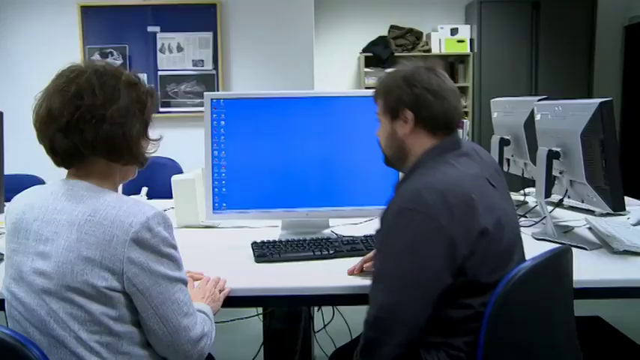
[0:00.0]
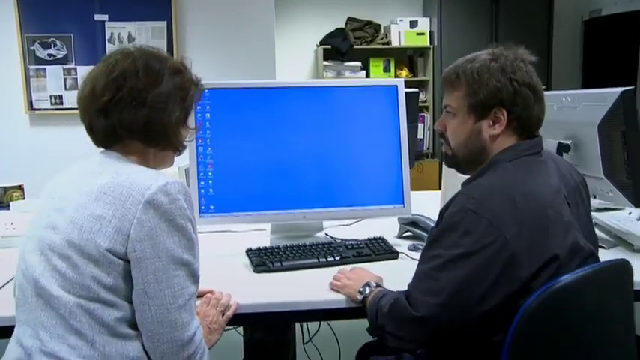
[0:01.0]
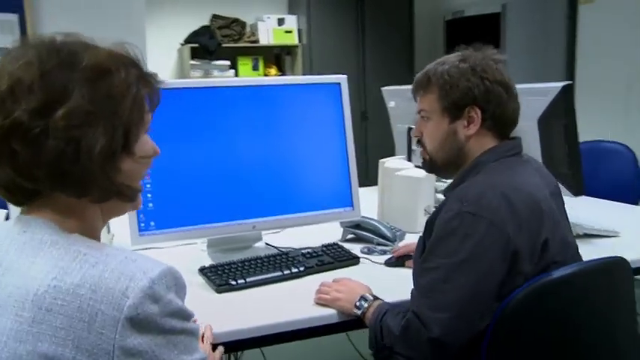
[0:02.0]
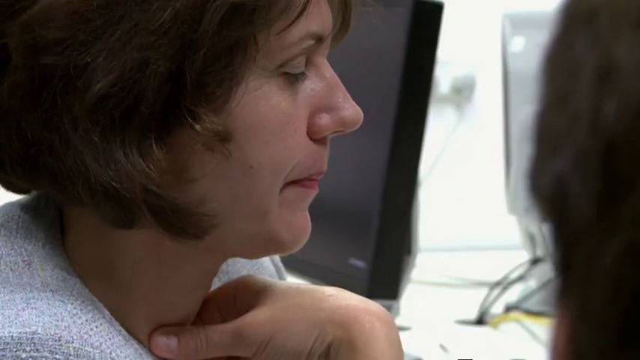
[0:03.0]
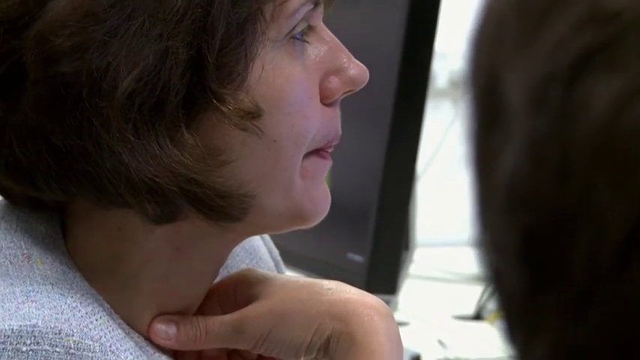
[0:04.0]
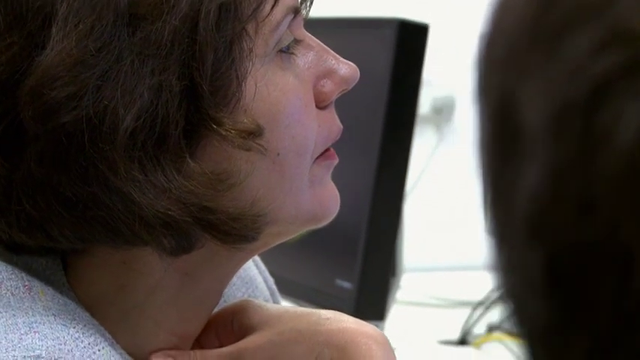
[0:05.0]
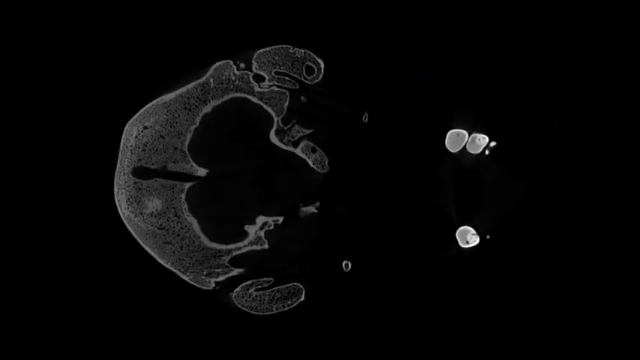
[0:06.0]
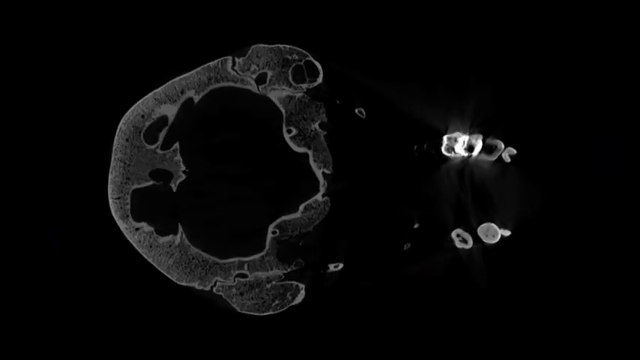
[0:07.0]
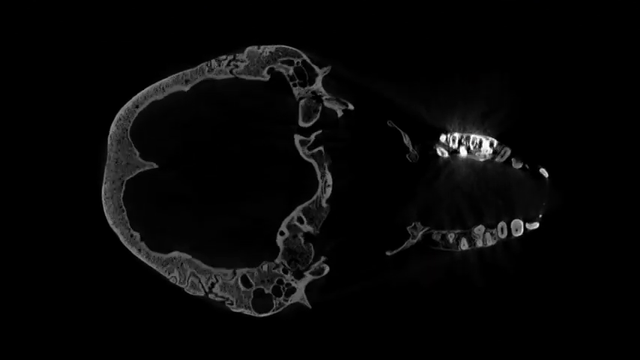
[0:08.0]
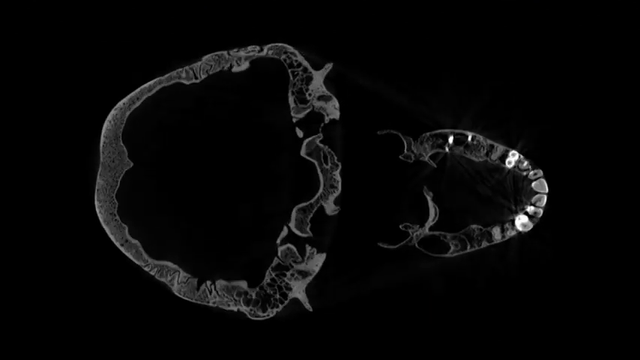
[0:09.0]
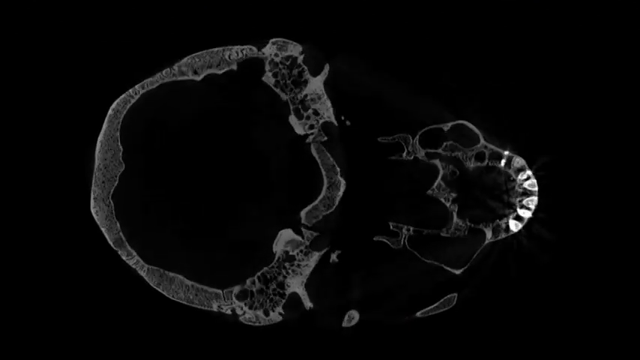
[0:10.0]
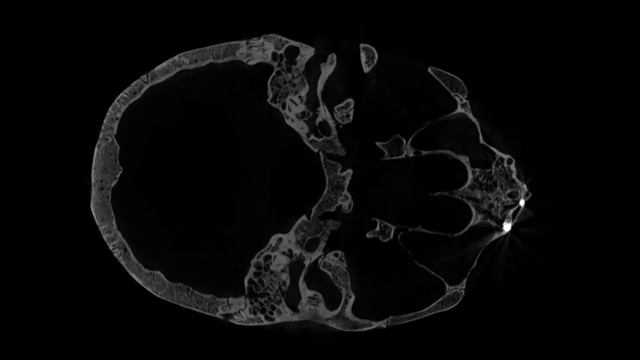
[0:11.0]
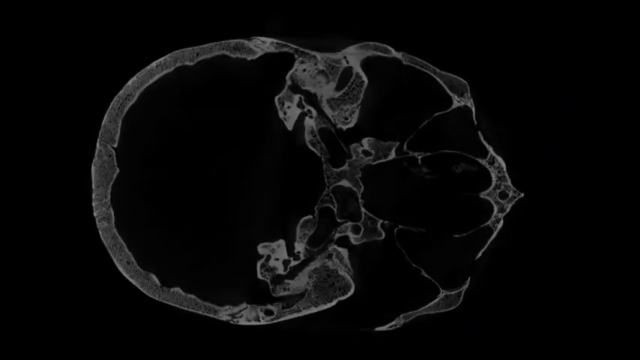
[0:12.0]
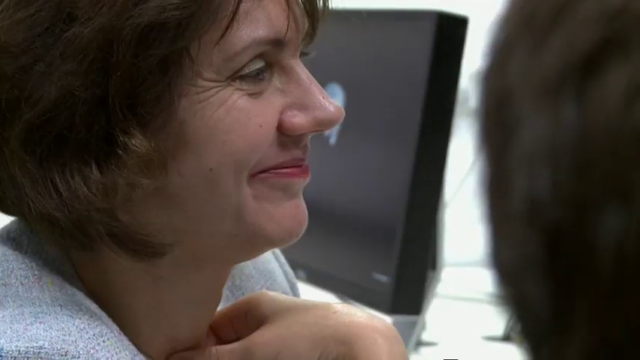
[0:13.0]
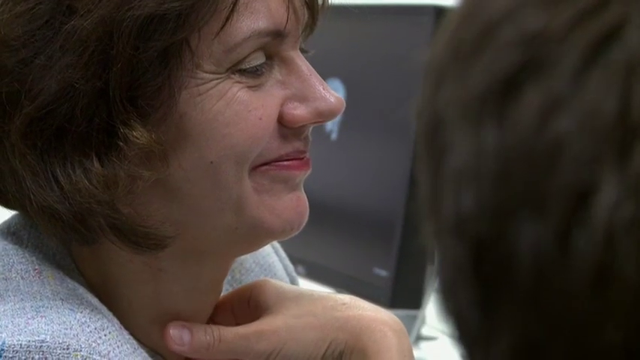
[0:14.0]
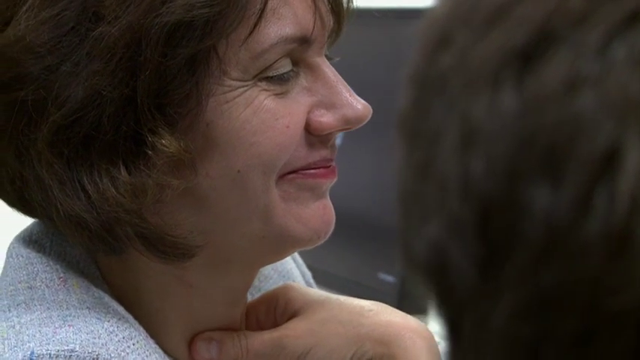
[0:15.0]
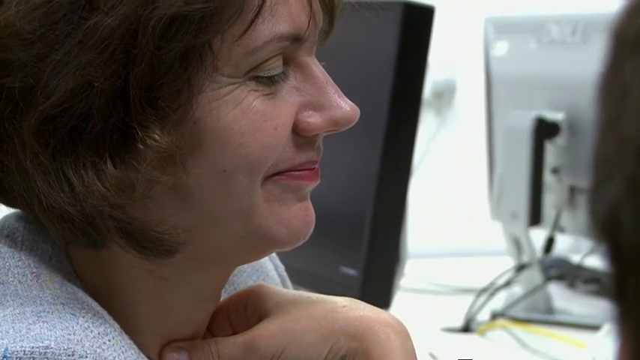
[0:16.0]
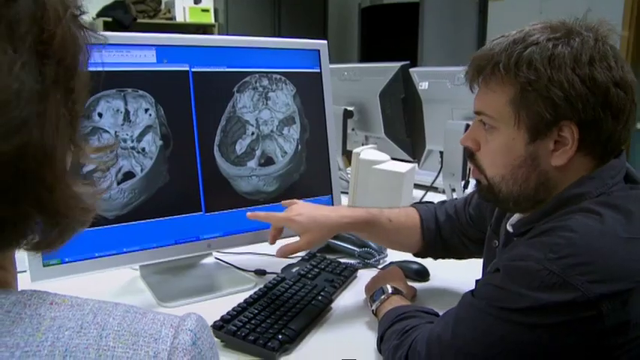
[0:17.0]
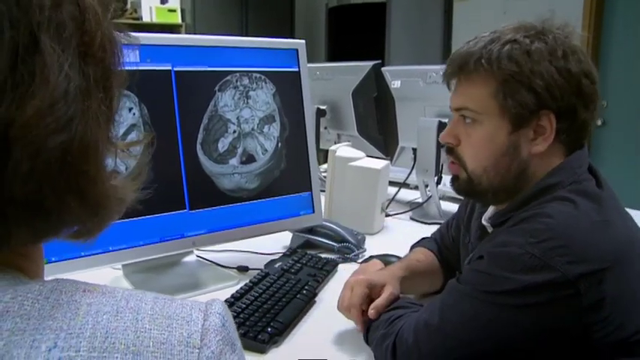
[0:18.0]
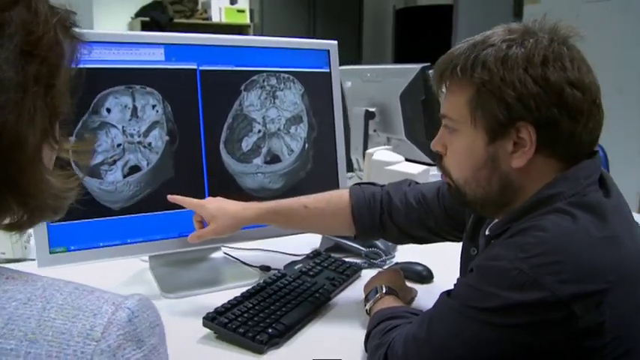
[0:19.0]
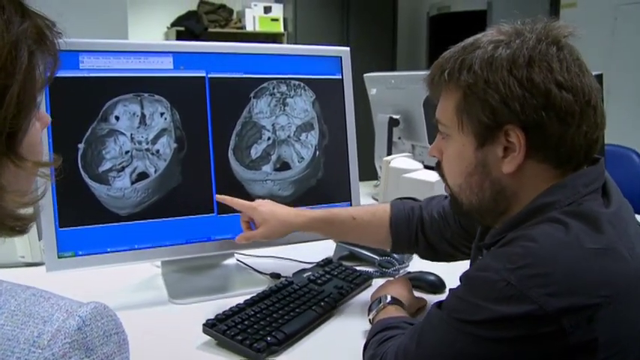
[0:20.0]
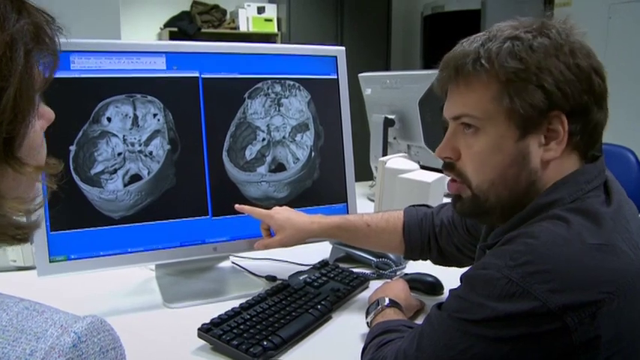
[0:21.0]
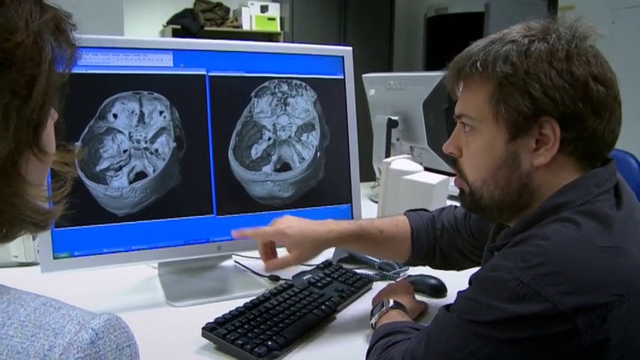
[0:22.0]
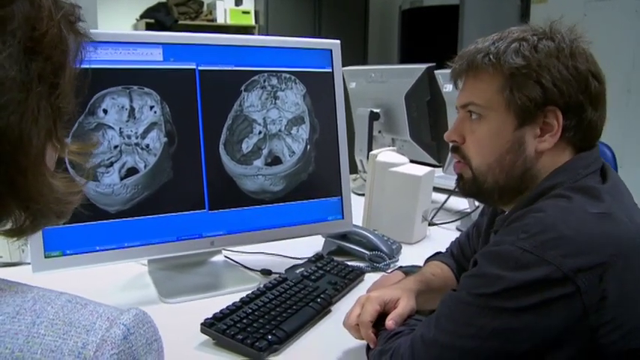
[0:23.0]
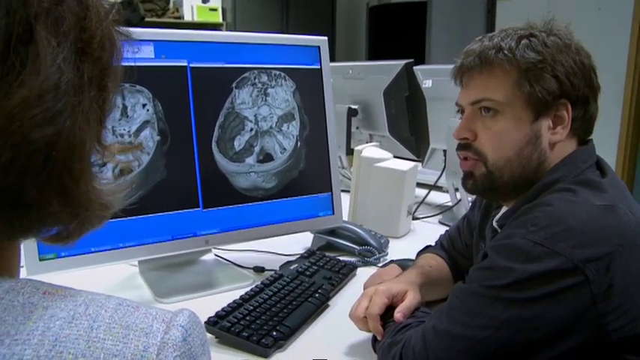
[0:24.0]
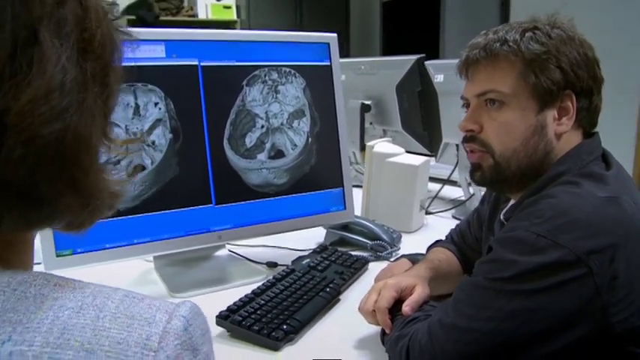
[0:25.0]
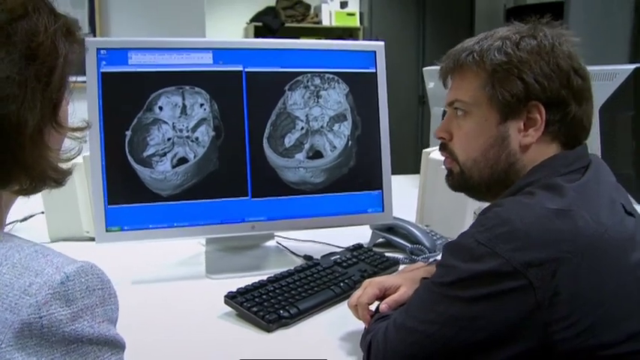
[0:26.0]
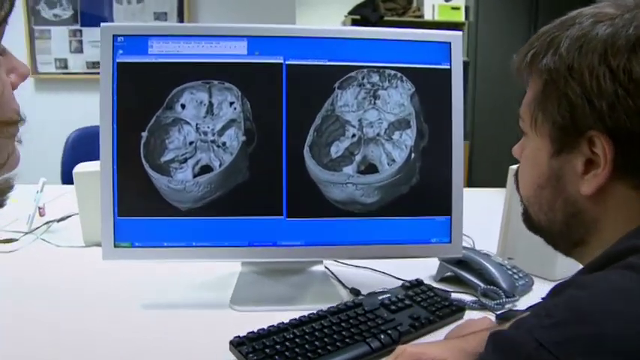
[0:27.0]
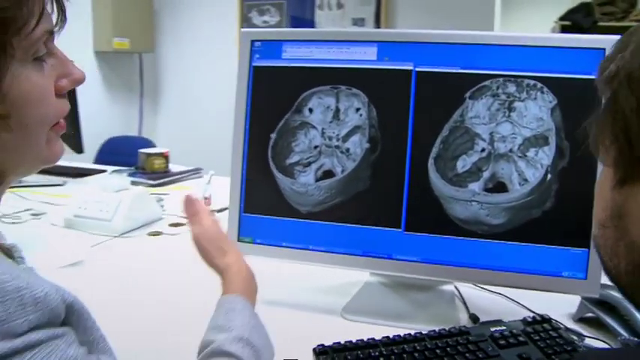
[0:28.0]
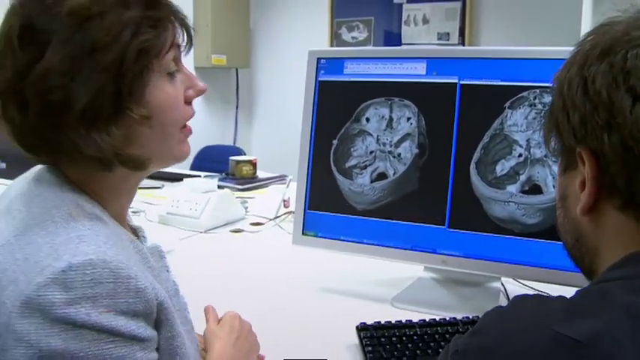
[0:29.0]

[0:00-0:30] Two middle-aged people, a man and a woman, are sitting at a desk in front of a computer screen. The man wears a dark-collared shirt or button-down shirt. The woman has shorter brown hair and a gray suit coat on. Both are looking at the screen, which shows something that almost looks like a top view of a skull, though it is hard to make out: it is all black, with various white or grayish images flashing on it. The screen is then split into two parts, a left and a right, each showing an object that looks like the inside of something, and both people look at these objects. To the right of them, two other desktop computers are sitting on the desk.